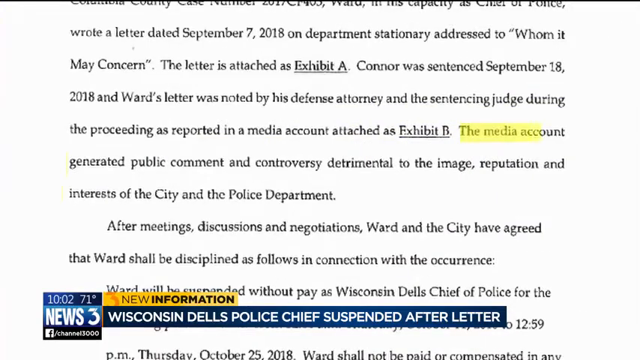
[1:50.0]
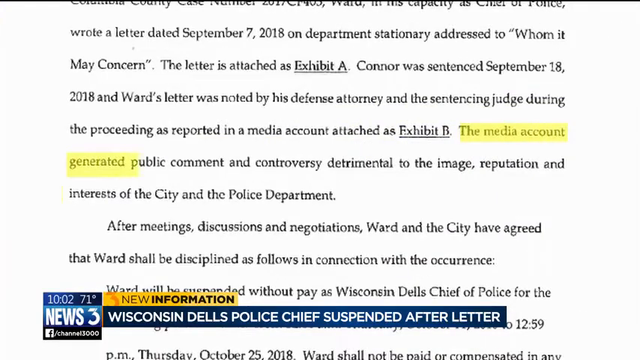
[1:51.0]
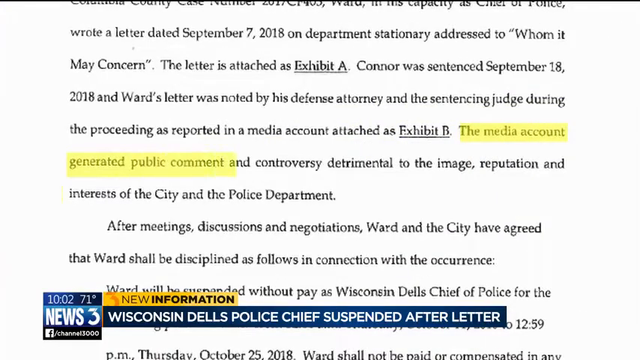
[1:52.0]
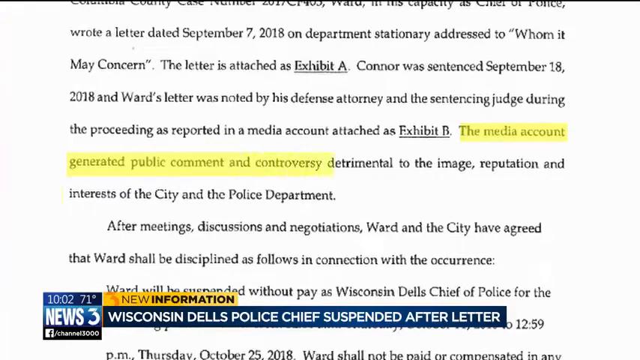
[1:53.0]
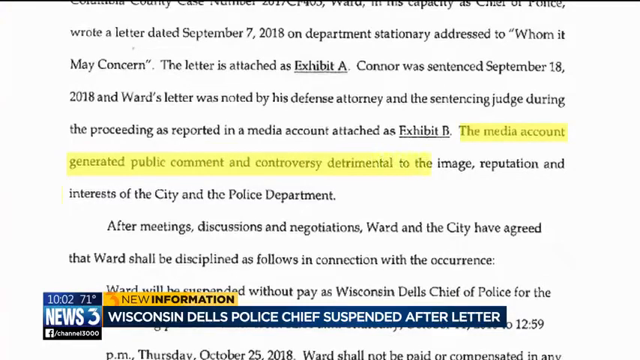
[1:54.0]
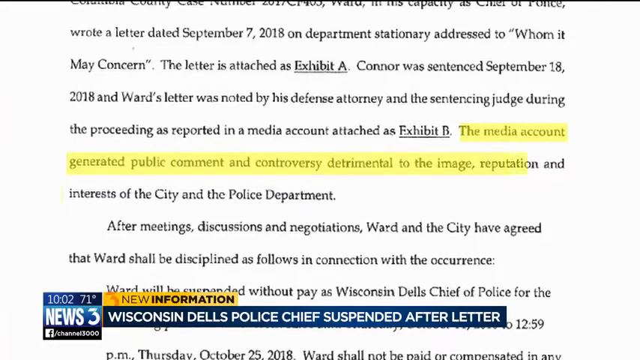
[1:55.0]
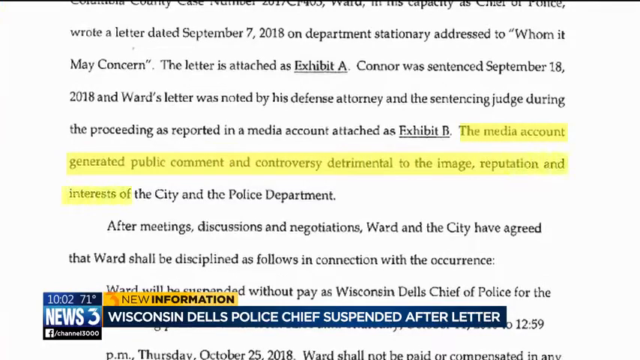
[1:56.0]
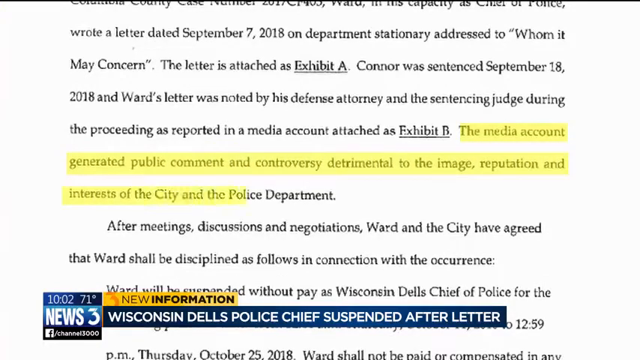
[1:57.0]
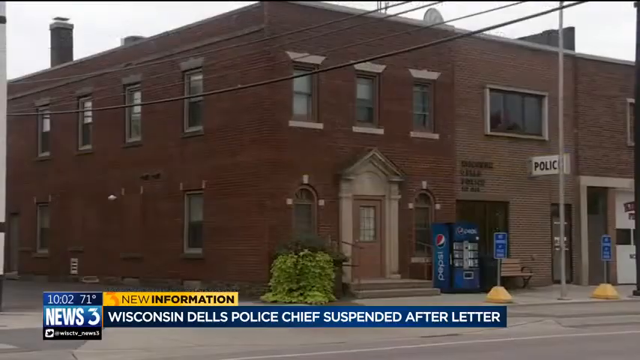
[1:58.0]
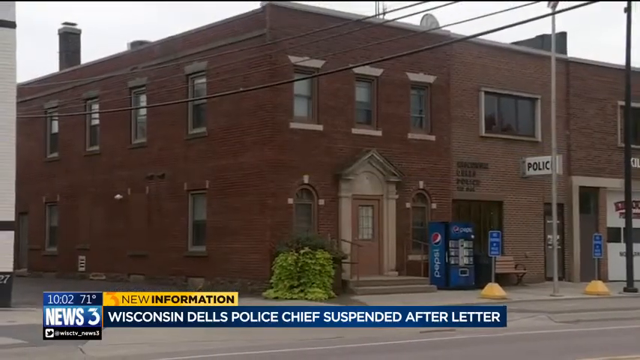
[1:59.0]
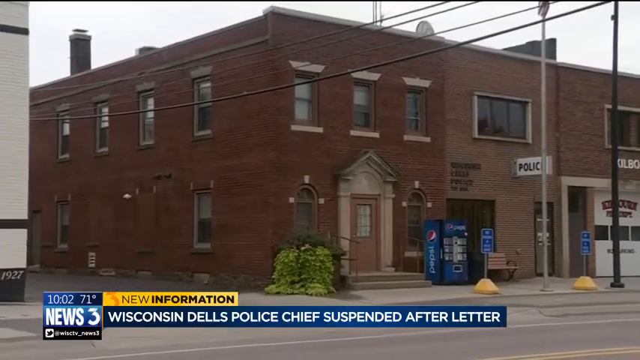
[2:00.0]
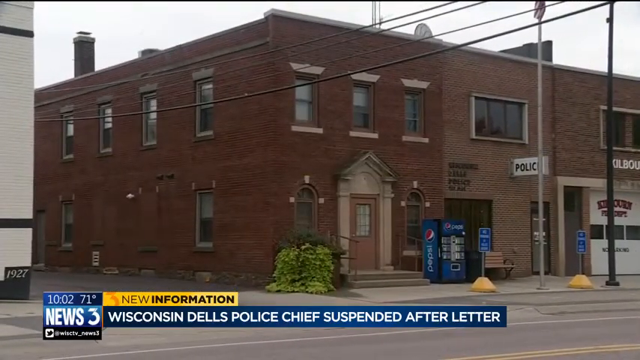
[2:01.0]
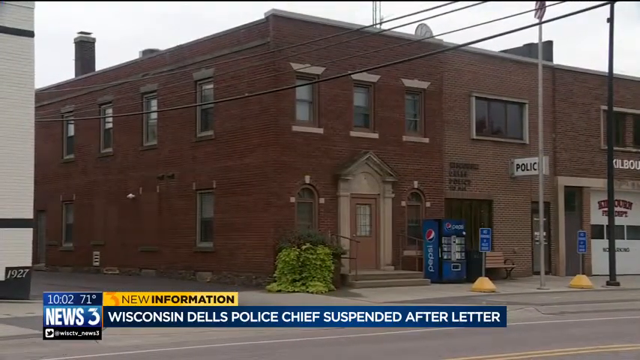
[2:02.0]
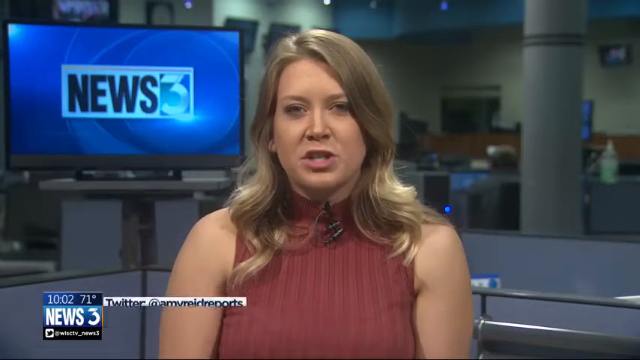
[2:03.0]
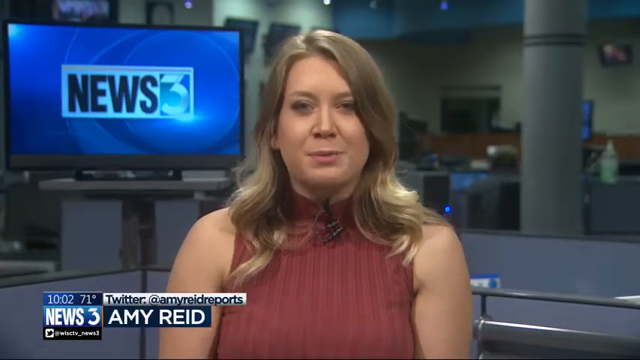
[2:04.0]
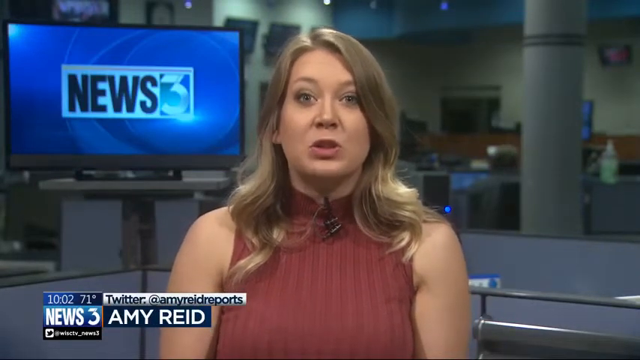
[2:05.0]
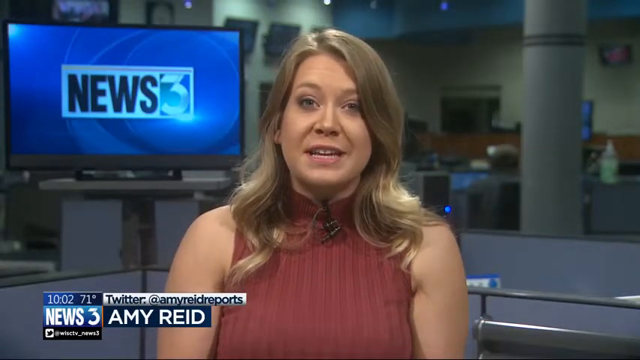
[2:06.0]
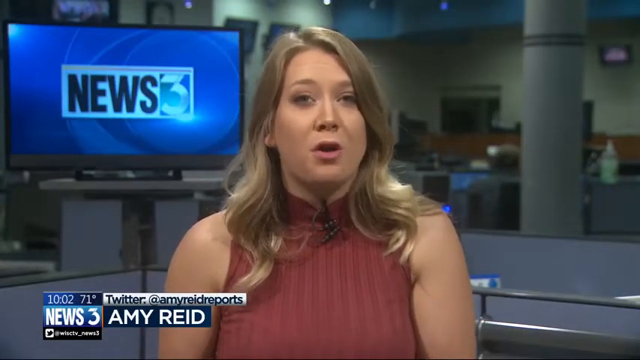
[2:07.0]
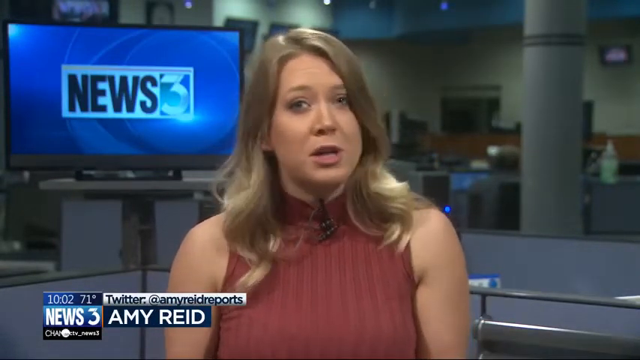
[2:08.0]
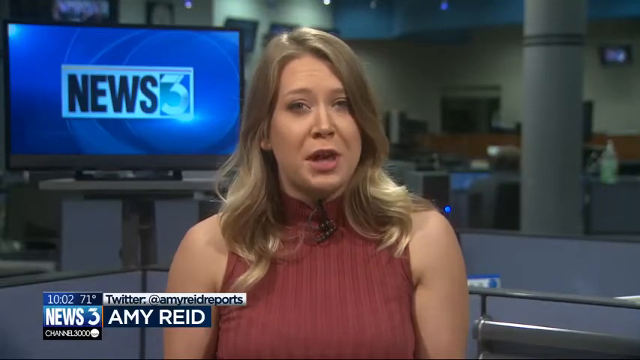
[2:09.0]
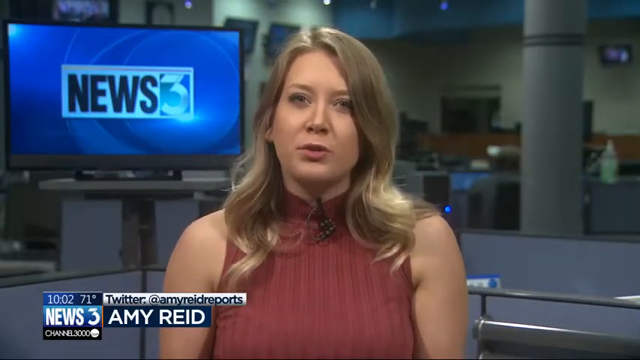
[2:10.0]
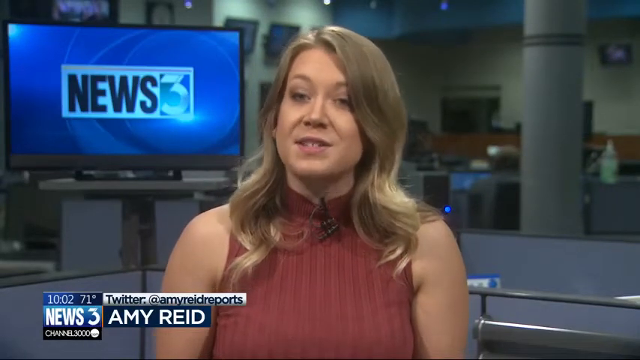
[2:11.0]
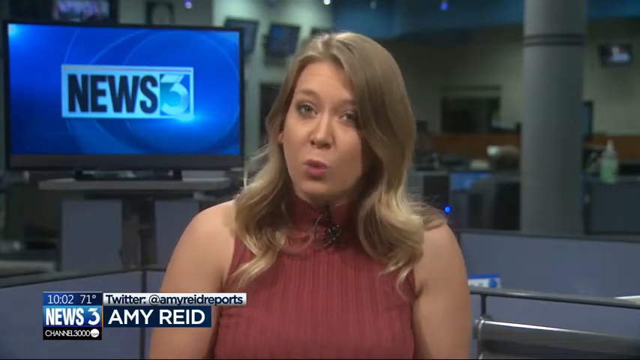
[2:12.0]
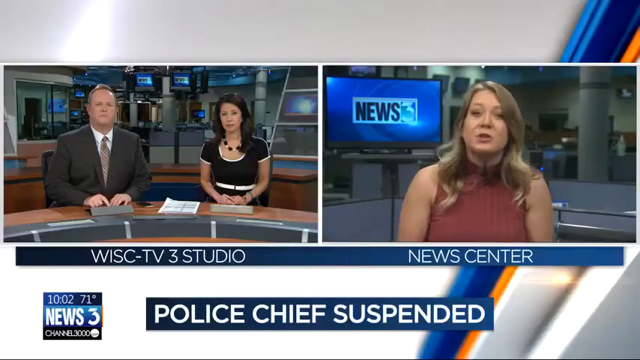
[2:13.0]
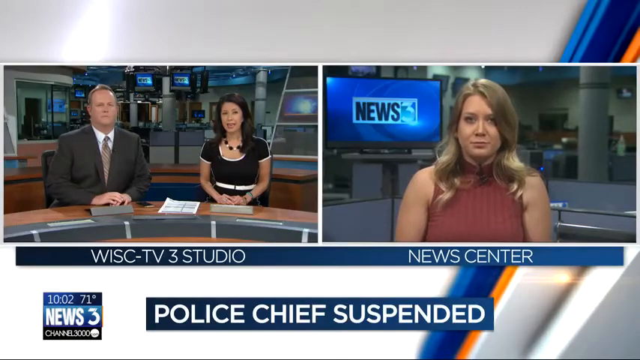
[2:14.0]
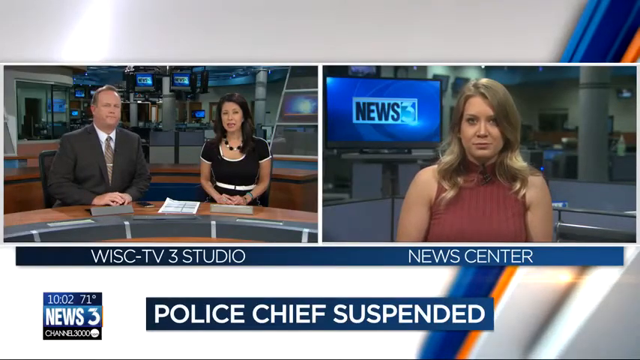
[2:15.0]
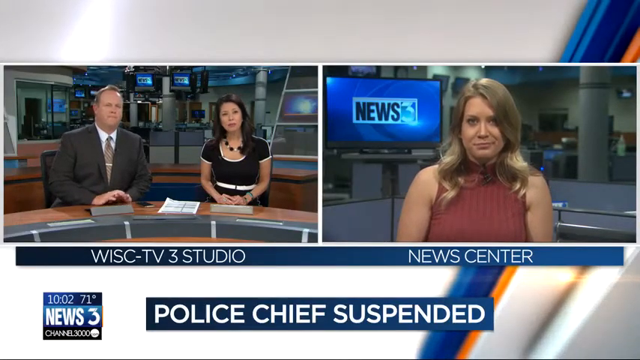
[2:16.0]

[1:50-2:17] Text on the screen reads "the media account generated public comment and controversy detrimental to the image, reputation, and interests of the city and police department," alongside the Channel 3 News headline "Wisconsin Dales police chief suspended after letter." The police station is shown. The video then returns to the newsroom, where the blonde reporter Amy Reed appears with a microphone clipped to the top of her outfit and monitors behind her; no one else is visible behind her. She finishes the segment, and the video switches to the Wisconsin TV3 studio, where a woman in a black dress and a man in what looks like a gray suit appear.